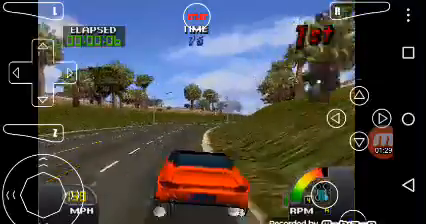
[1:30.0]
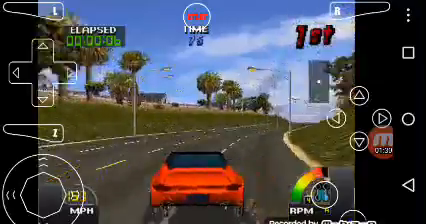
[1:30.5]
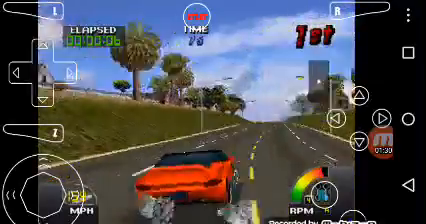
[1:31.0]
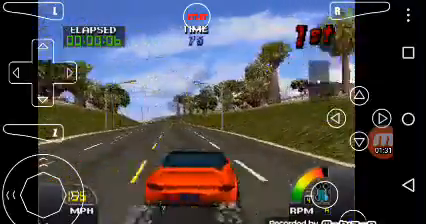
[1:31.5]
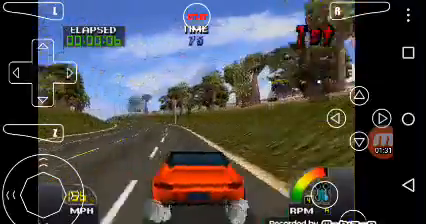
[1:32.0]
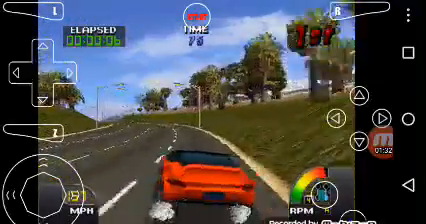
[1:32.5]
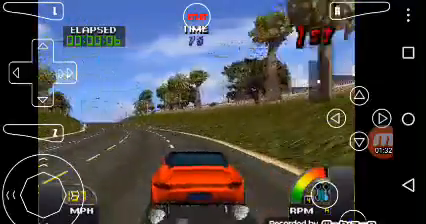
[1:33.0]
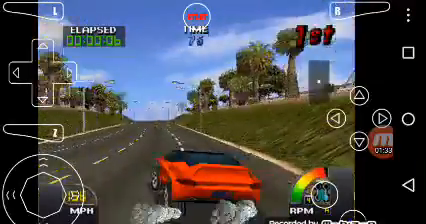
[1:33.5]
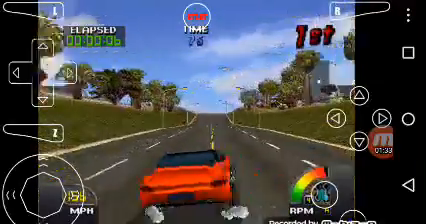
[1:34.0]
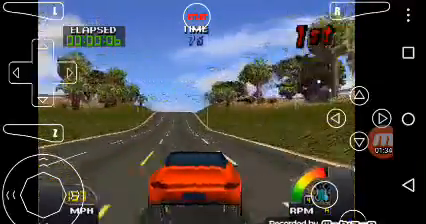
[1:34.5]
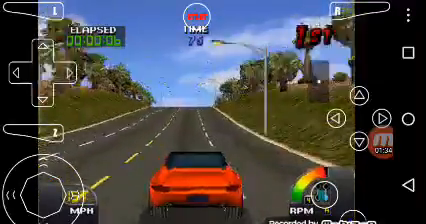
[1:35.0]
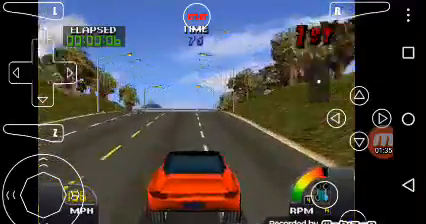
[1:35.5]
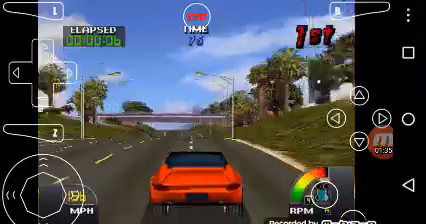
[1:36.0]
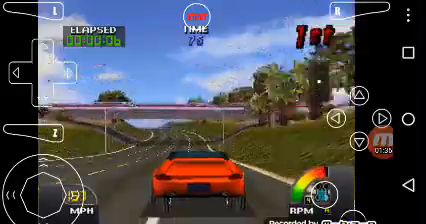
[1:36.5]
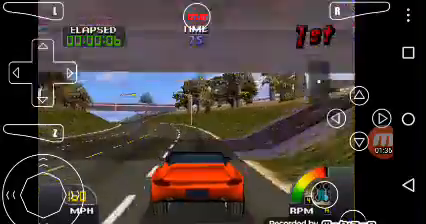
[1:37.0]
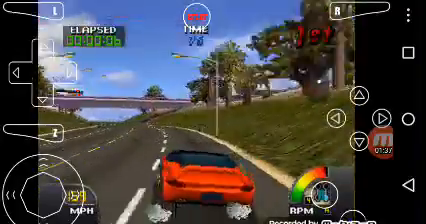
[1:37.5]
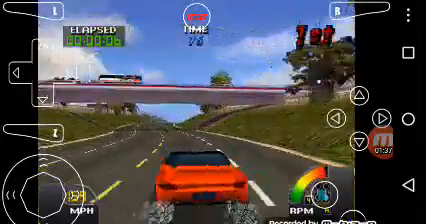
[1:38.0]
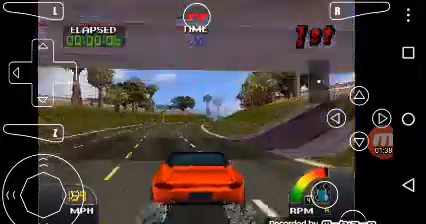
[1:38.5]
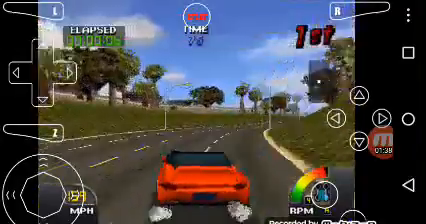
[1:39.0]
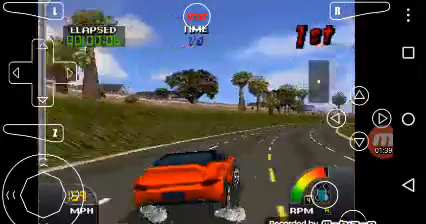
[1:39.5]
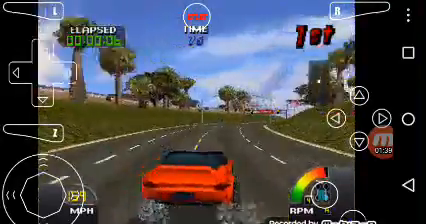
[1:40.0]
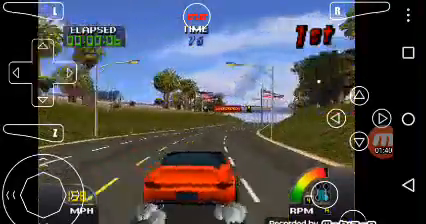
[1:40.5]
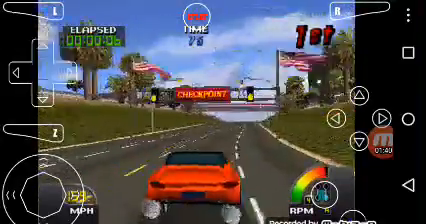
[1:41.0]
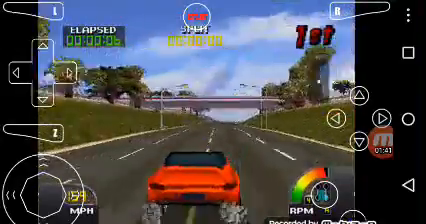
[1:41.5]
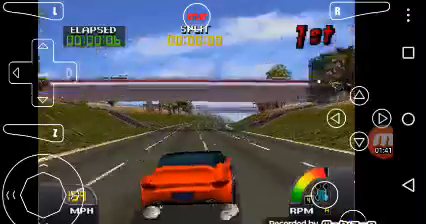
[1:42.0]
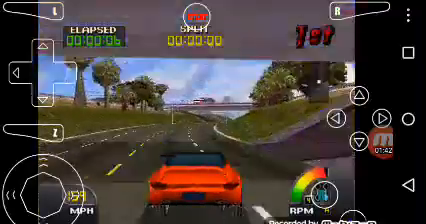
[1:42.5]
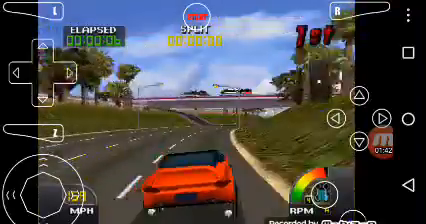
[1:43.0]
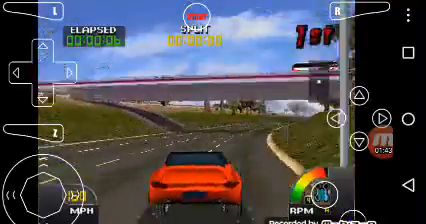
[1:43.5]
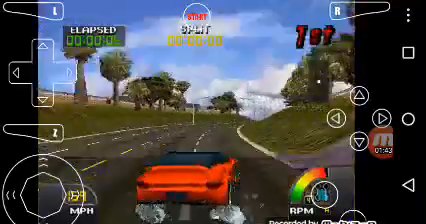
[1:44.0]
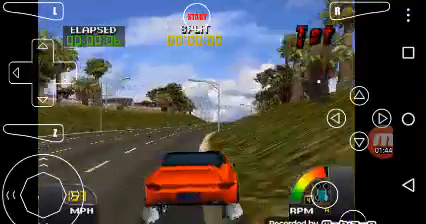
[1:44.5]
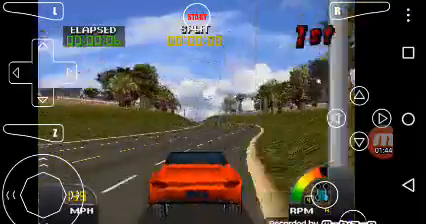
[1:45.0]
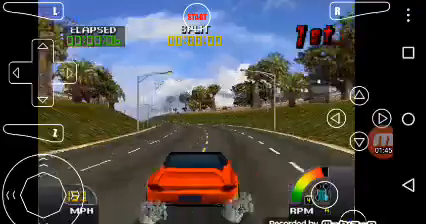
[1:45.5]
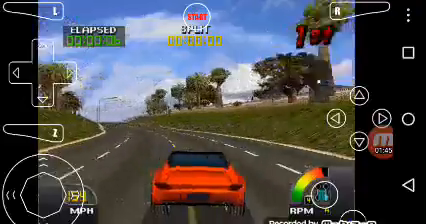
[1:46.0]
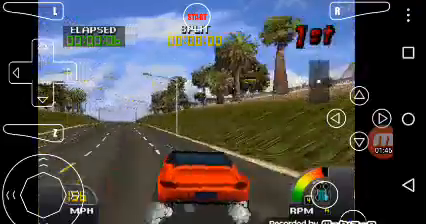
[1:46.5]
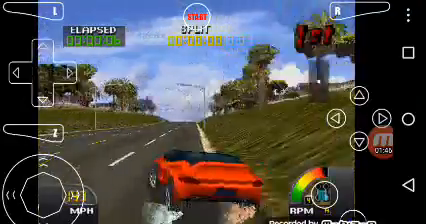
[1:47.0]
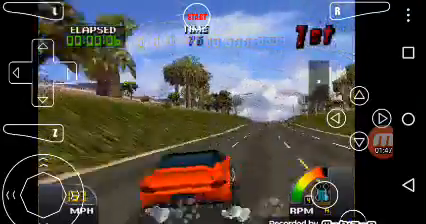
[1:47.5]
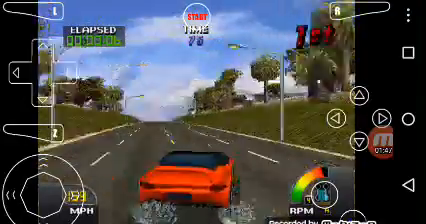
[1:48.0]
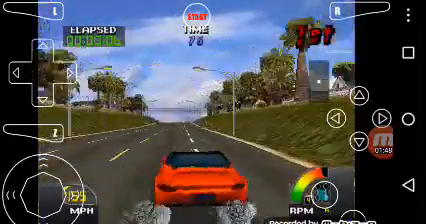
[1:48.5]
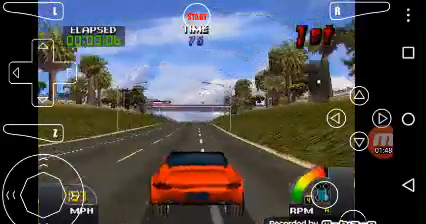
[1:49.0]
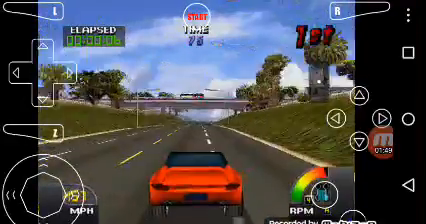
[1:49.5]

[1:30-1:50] The red car with a black top drives on the highway in the video game and has a hard time staying on the road. Trees and grass line both the left and right sides of the highway. A controller overlay shows up, down, right and left buttons on the left side and the same on the right side. At the upper left and upper right are toggle buttons that look like the front buttons of a controller; the left one is labeled with an L and the right one with an R. The sky in the background is blue with some clouds.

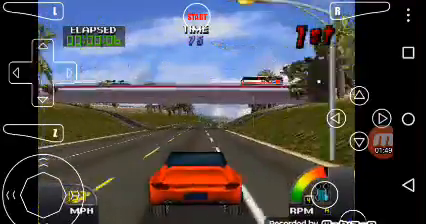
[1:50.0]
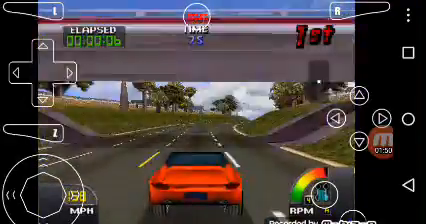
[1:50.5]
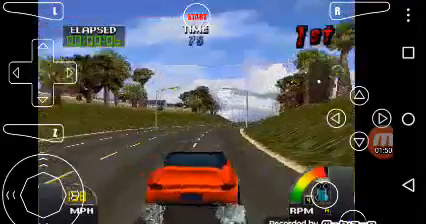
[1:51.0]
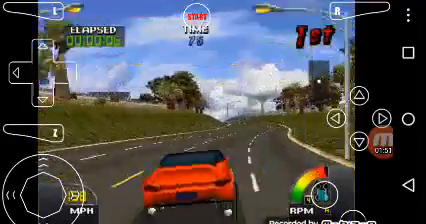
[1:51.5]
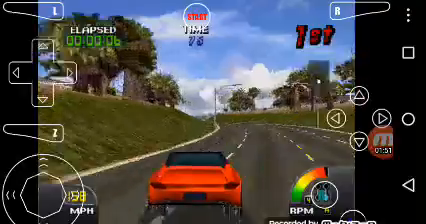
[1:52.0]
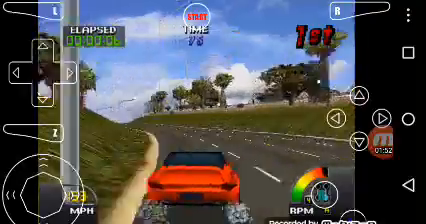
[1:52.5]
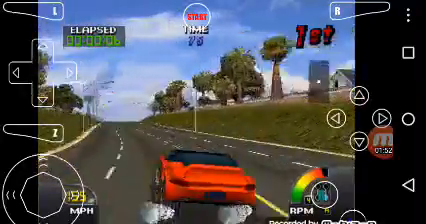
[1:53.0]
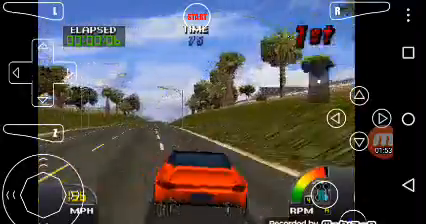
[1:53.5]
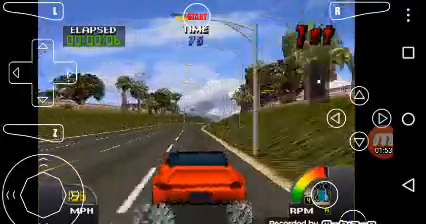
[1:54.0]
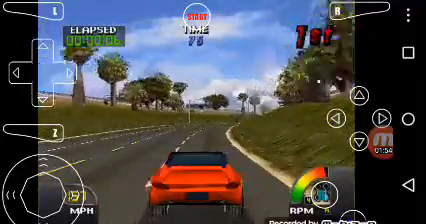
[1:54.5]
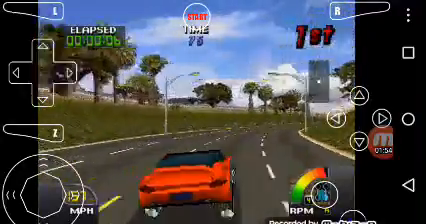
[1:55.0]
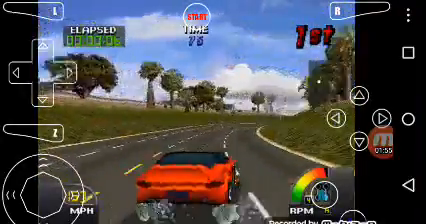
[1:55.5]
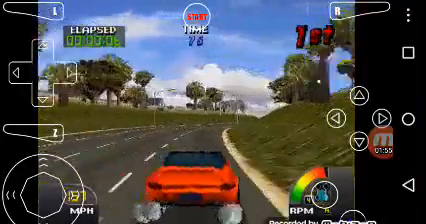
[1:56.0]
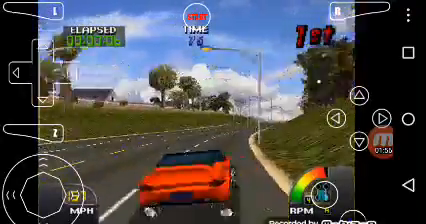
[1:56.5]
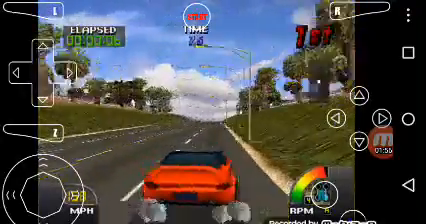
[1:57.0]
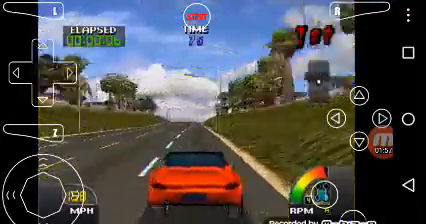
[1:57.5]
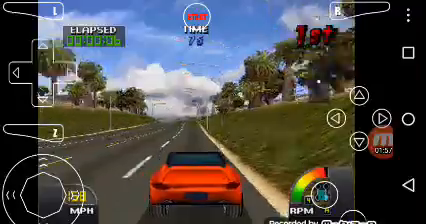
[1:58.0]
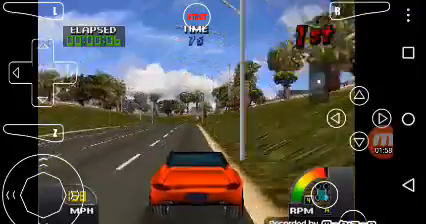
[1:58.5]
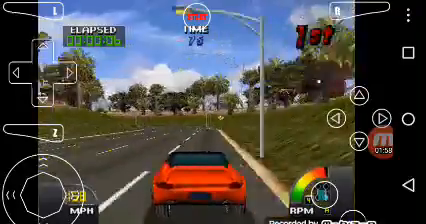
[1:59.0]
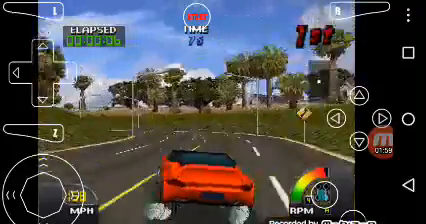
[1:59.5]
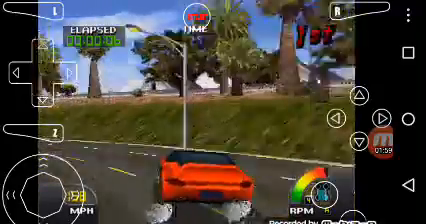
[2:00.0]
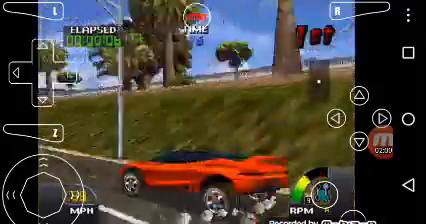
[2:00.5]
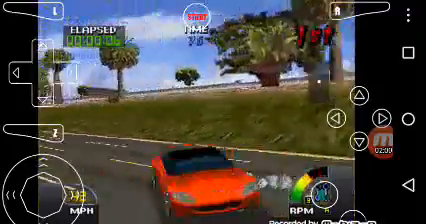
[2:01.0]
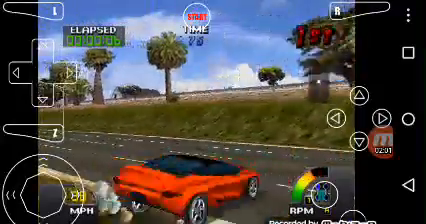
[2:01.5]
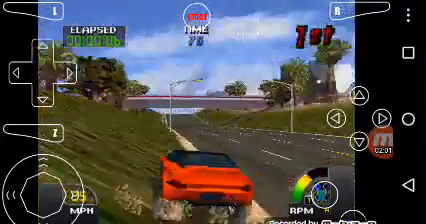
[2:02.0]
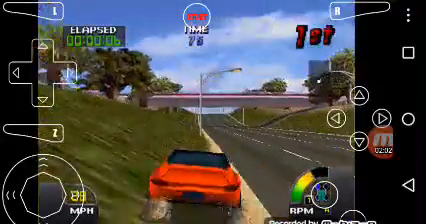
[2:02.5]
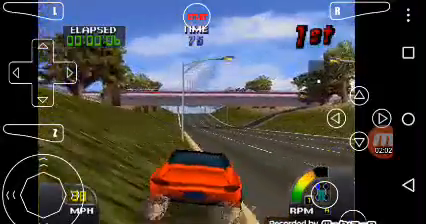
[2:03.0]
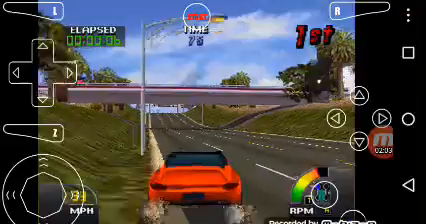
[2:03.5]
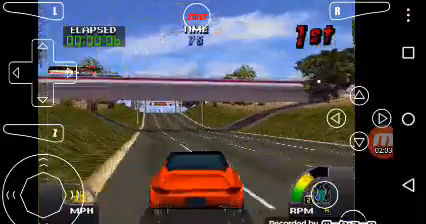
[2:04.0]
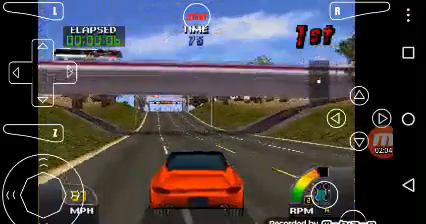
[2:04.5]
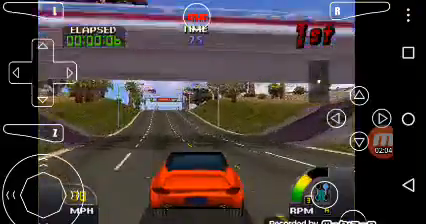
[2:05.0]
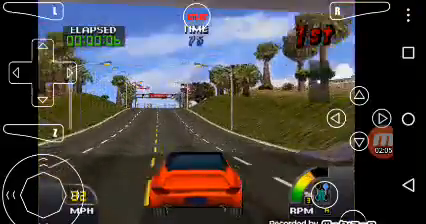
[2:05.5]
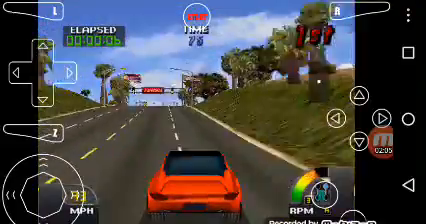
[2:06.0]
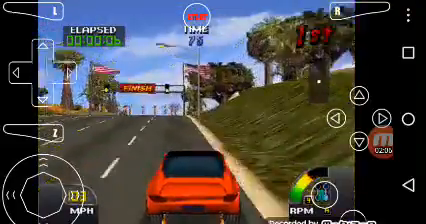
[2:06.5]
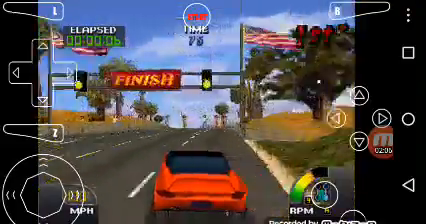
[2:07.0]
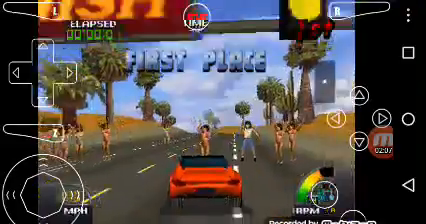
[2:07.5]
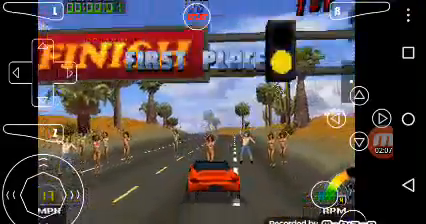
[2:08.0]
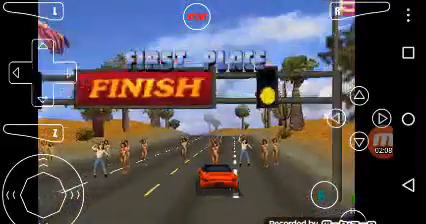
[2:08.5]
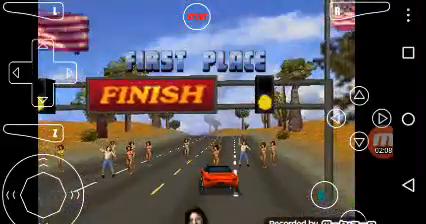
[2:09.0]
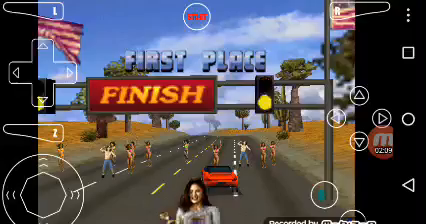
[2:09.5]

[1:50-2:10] The car races on a four-lane highway in the video game. It hits a light pole and spins around in a 360. Near the end, the car reaches the finish line, where multiple people are standing on the road. A large sign that looks like a highway sign spans the upper part of the track and says "finish". On the left and right sides of the finish sign are lights that look green, as well as an American flag on each side. The people standing at the finish line look to have black hair and wear a type of bathing suit.